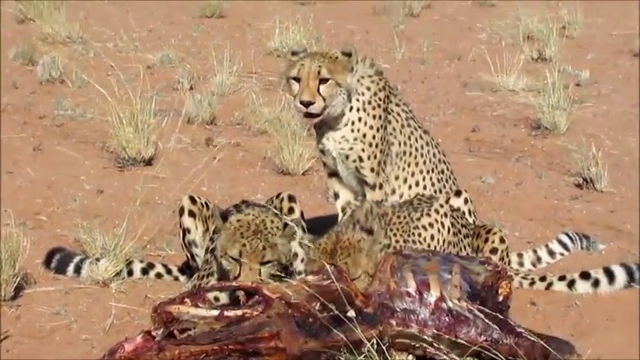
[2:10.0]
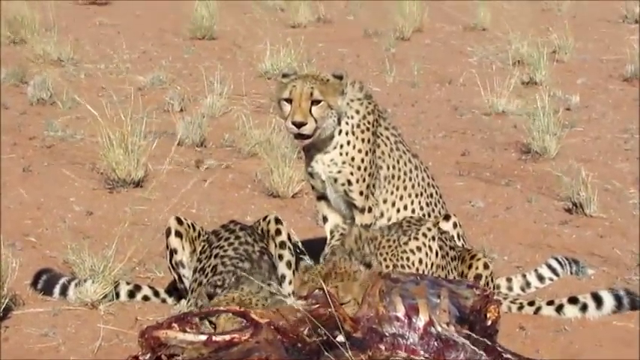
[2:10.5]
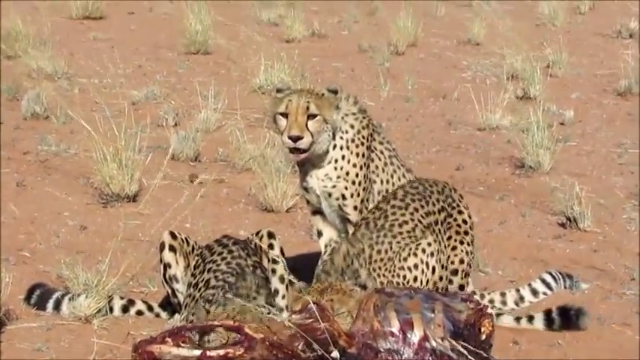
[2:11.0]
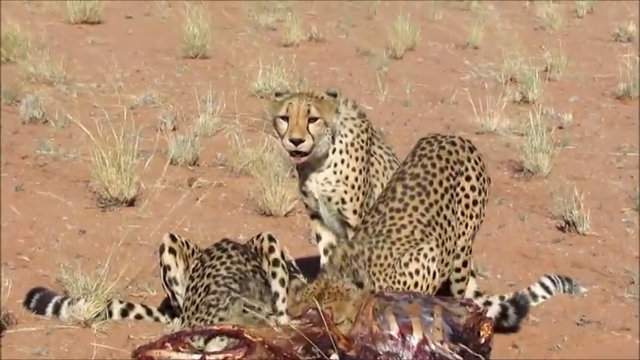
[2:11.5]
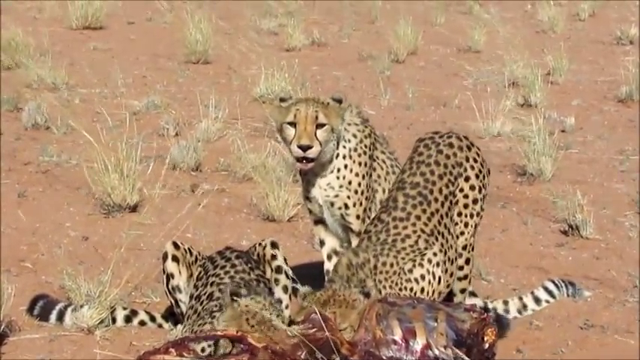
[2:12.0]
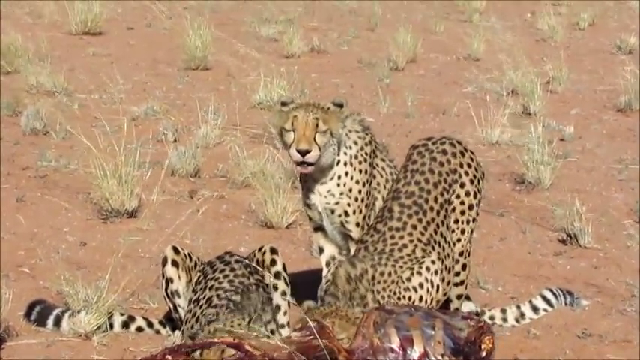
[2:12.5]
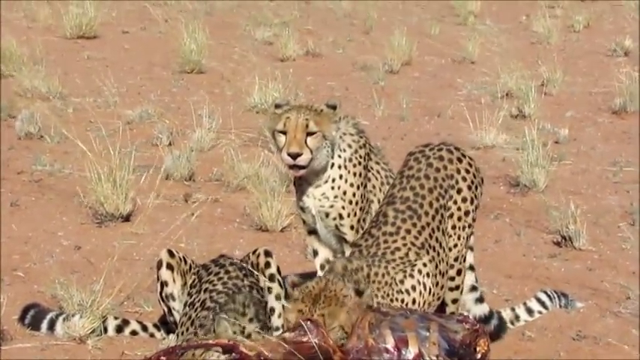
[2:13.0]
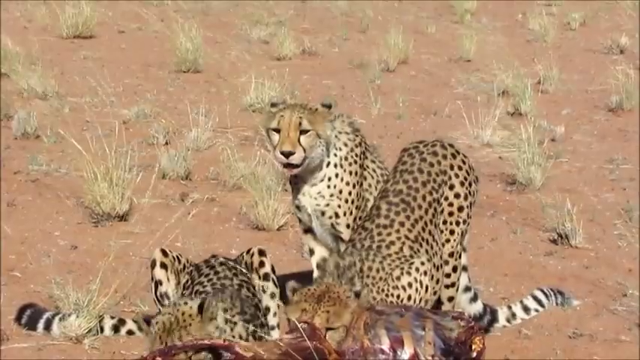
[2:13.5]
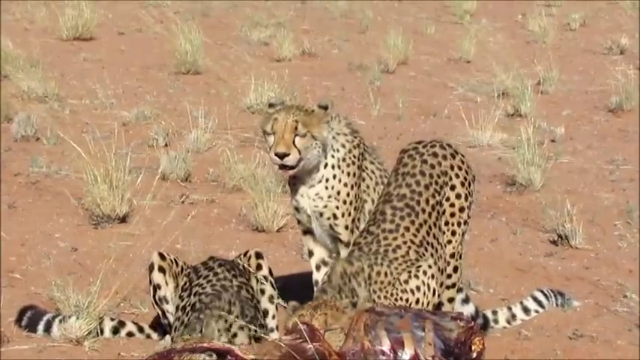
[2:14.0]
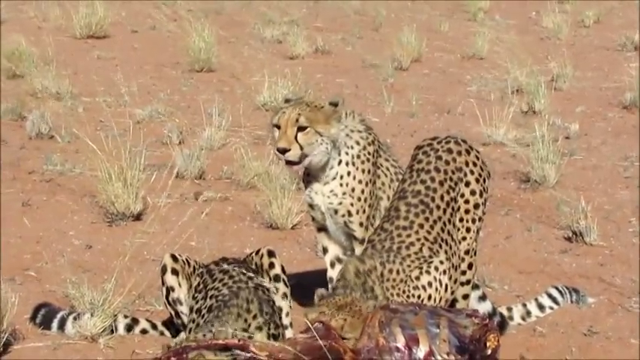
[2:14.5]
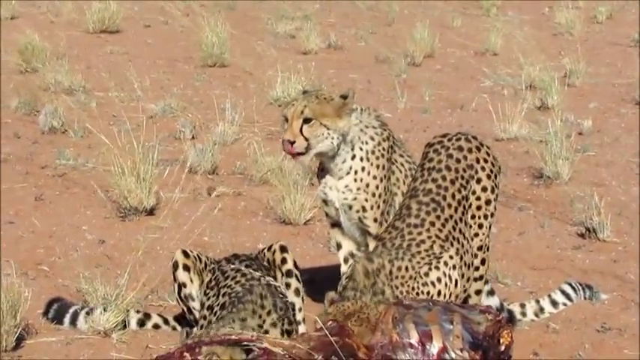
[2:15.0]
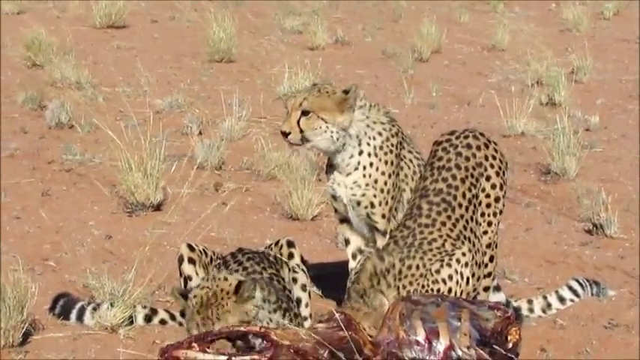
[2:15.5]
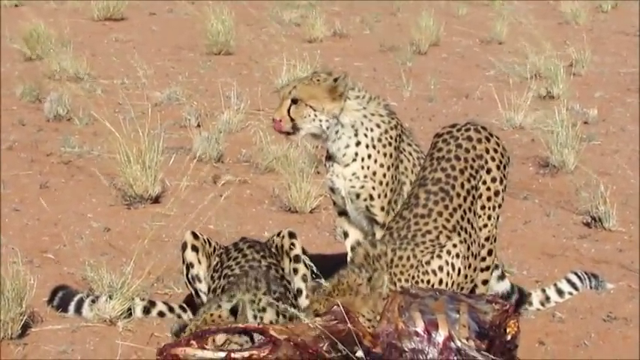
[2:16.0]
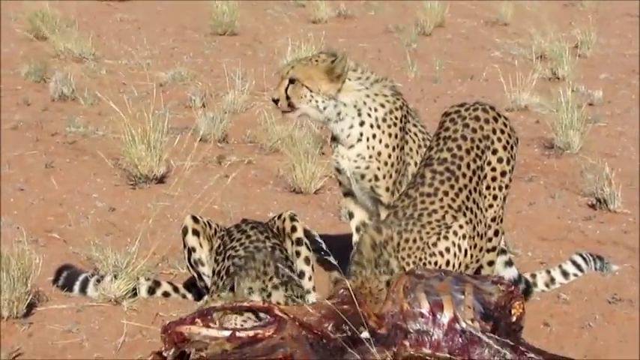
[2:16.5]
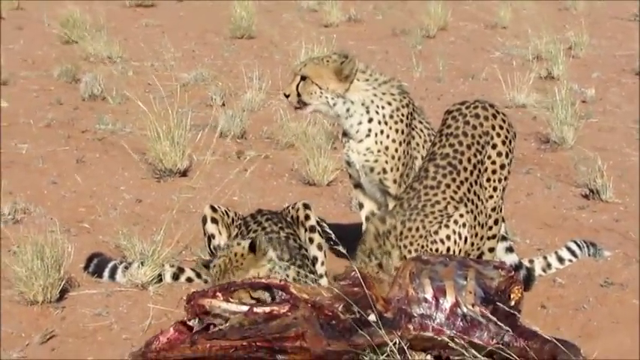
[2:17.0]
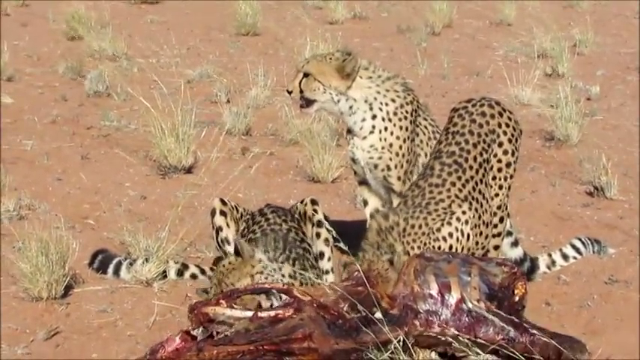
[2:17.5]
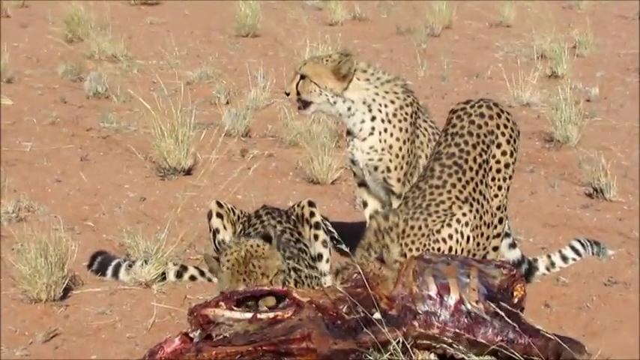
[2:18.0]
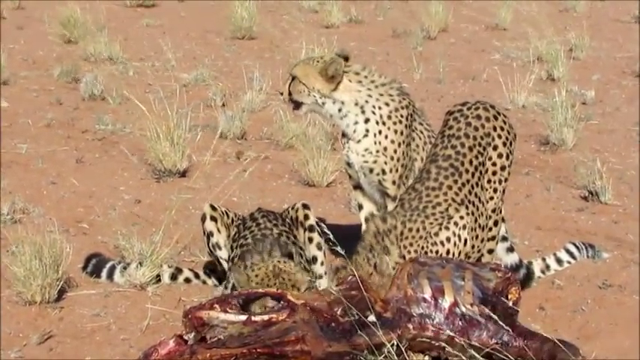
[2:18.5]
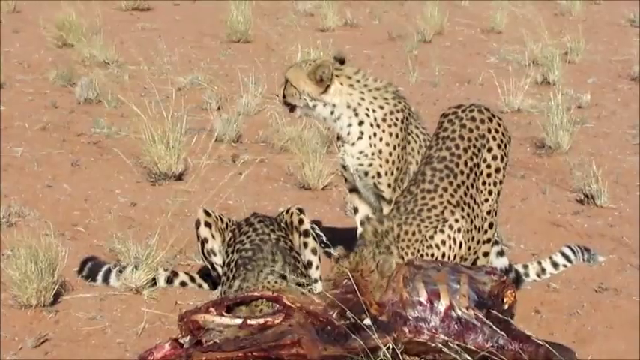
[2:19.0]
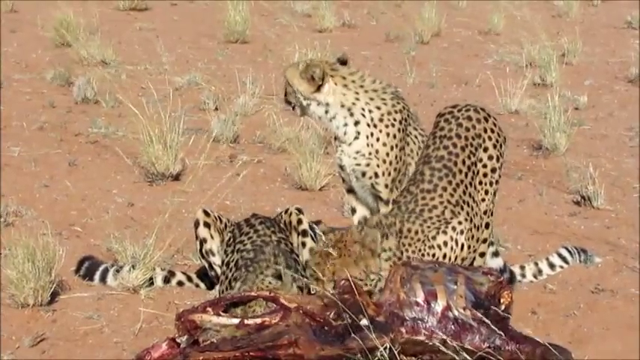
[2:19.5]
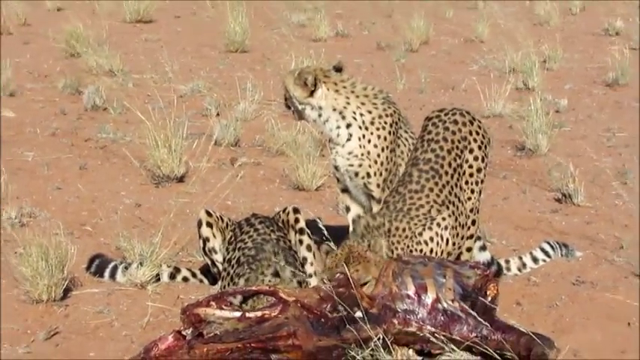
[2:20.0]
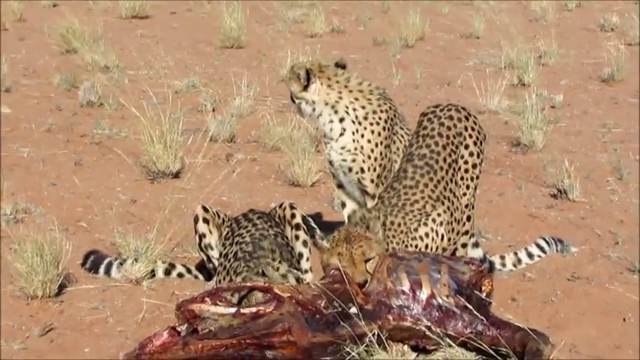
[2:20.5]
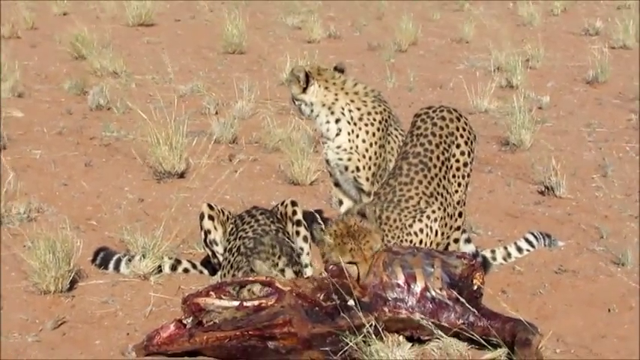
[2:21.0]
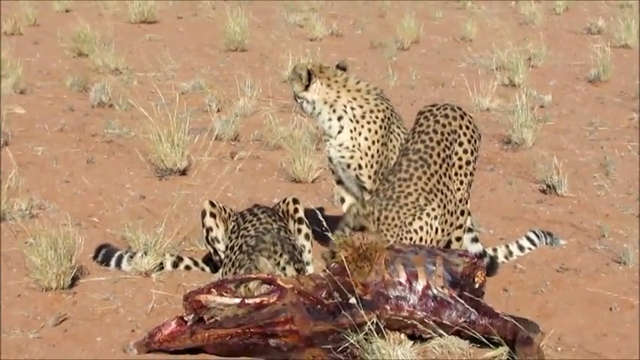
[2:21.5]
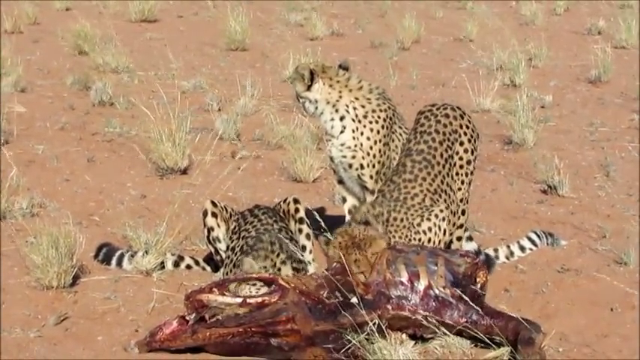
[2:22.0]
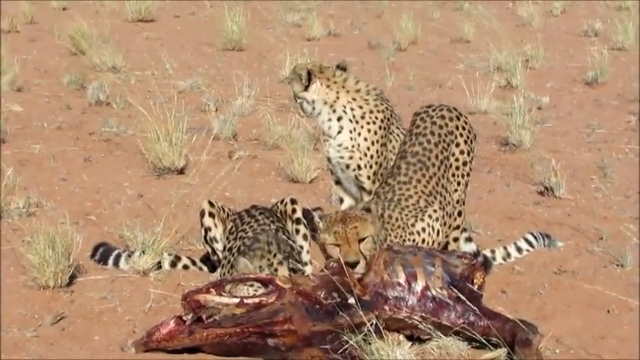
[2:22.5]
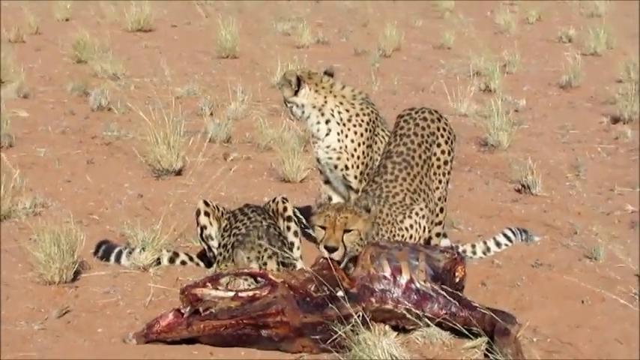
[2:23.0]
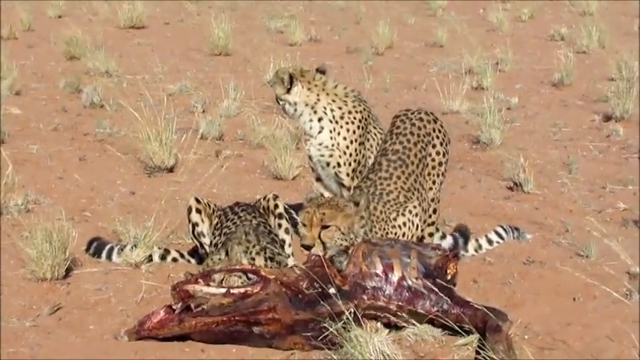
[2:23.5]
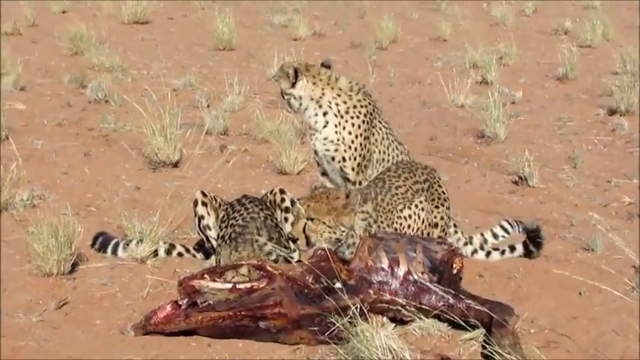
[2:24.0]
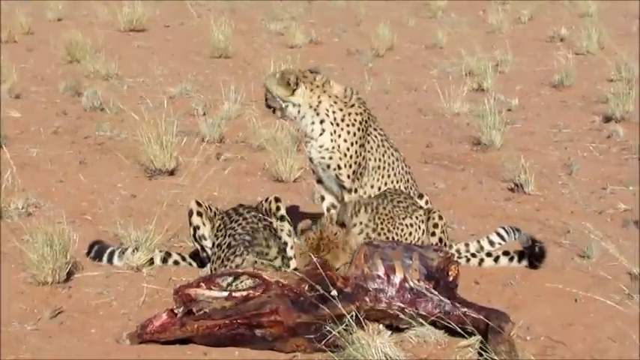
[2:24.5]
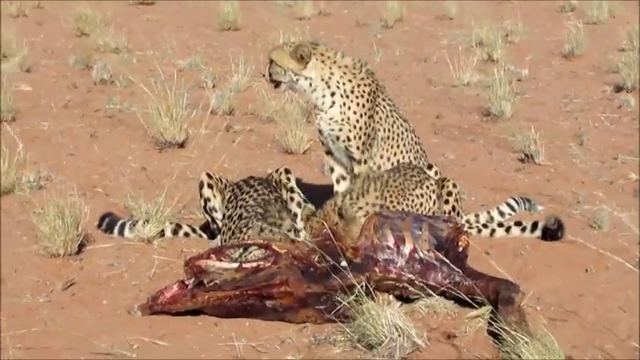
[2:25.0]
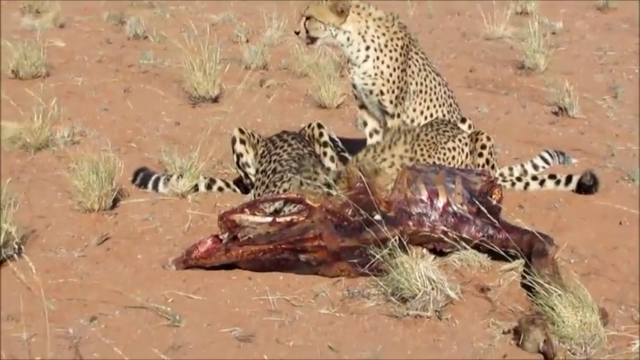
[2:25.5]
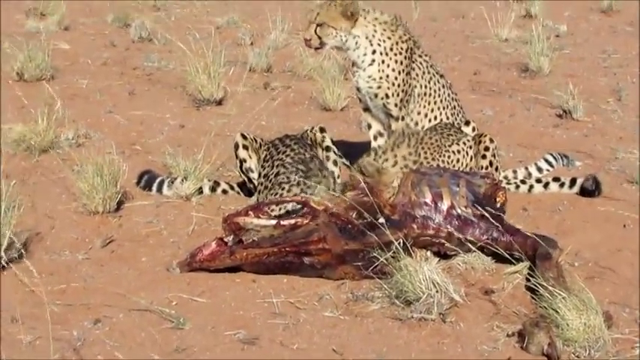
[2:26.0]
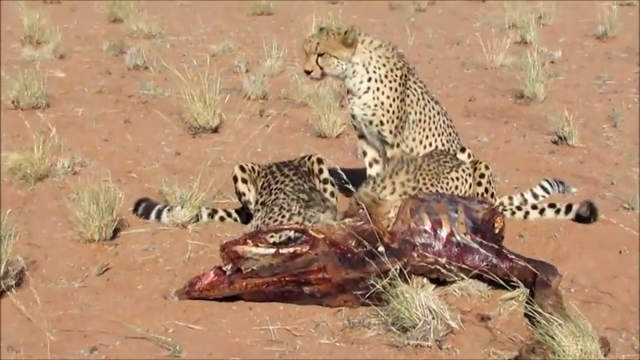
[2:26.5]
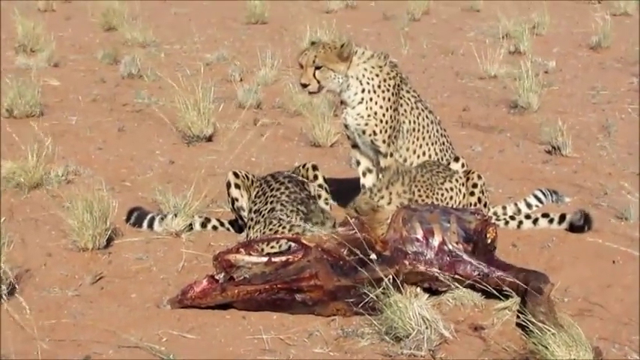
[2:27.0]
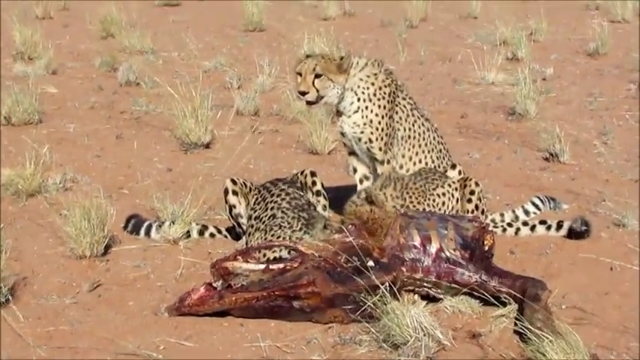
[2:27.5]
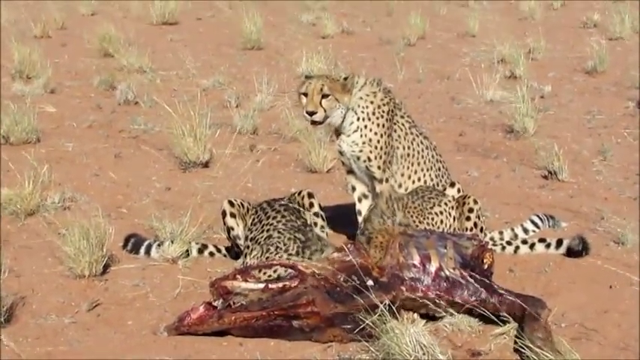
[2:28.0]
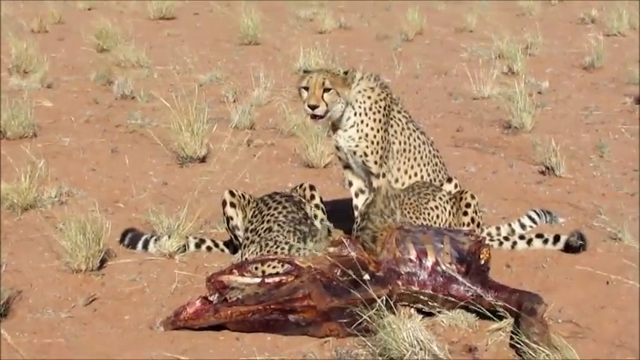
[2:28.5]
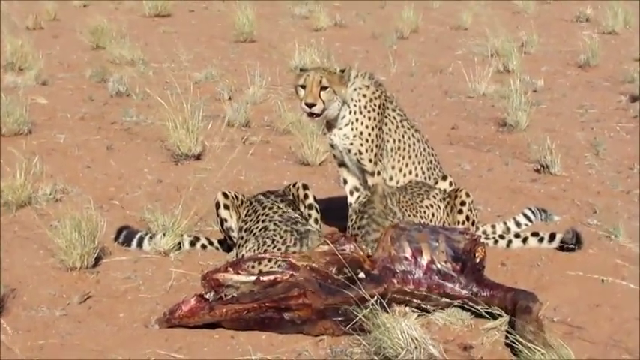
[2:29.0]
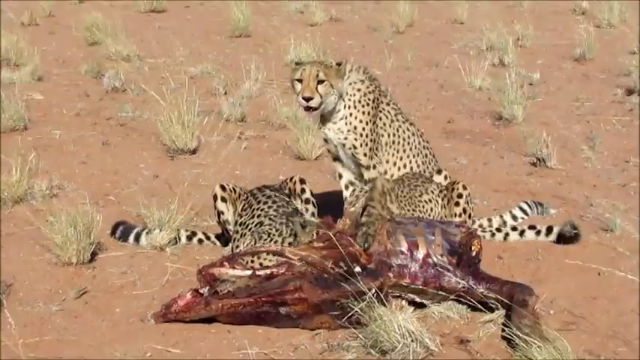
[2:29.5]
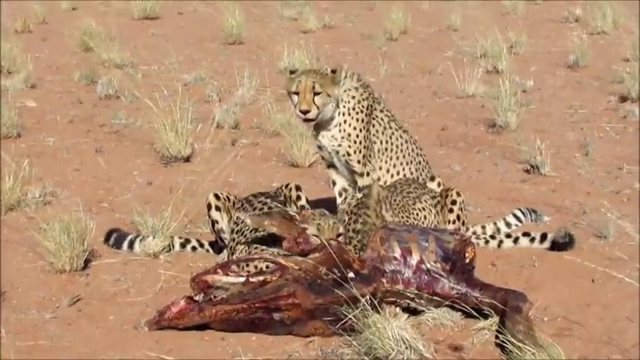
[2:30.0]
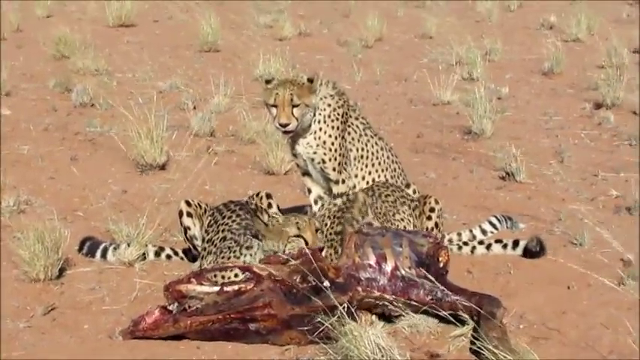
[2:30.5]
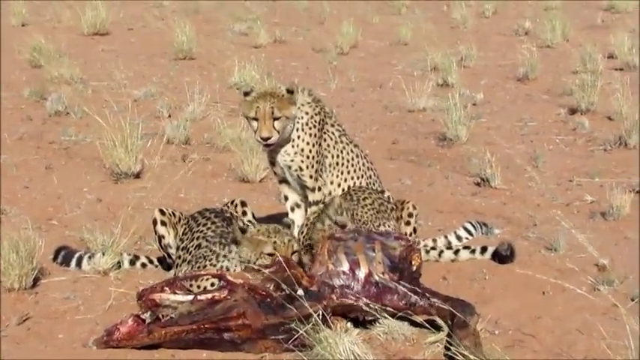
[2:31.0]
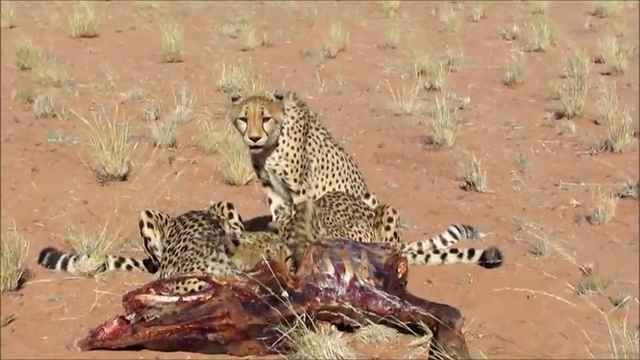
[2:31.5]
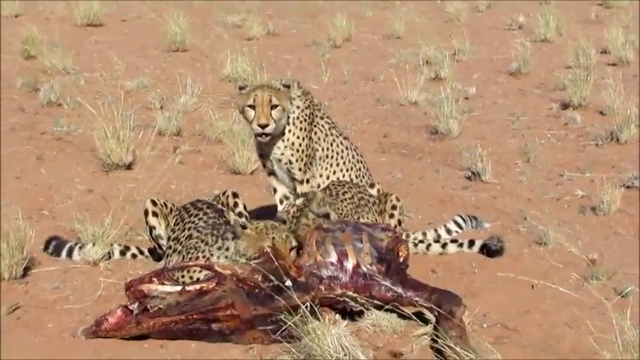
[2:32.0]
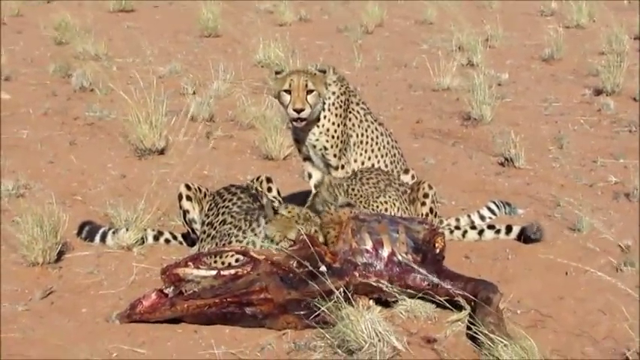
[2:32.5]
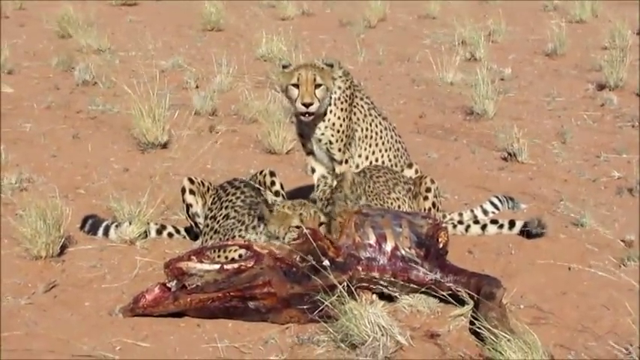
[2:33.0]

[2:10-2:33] Three cheetahs are in the frame: two of them on the ground eat a desiccated carcass fairly aggressively and quickly, while a third in the middle, just behind the two, kind of casually looks at the camera, probably seeing the cameraman. The setting is an arid shrubland with mostly brown ground and little tufts of grass here and there. The cheetah on the right raises its rear in the air to get a better angle at the food, and the cheetah on the left tears sinew off the bones on the left, where two big bones are mostly exposed from the rest of the flesh. The cheetah in the middle looks away, apparently toward the cheetah out of frame on the left that is sitting and watching. The video ends with the middle cheetah casually looking back toward the camera as the eating cheetahs tear a bit of meat from the center of the carcass.